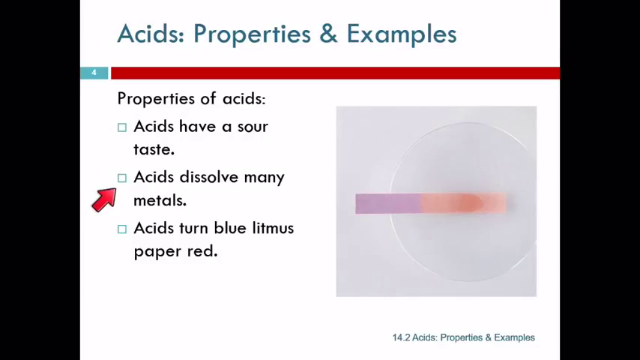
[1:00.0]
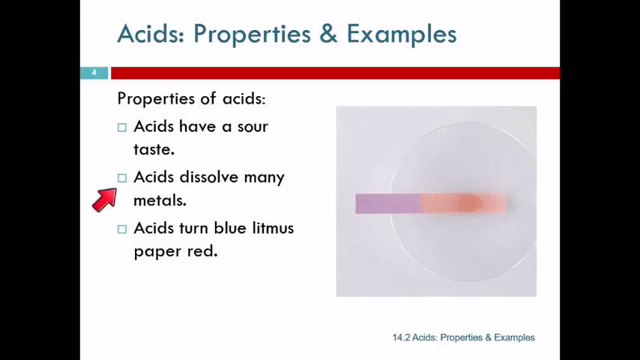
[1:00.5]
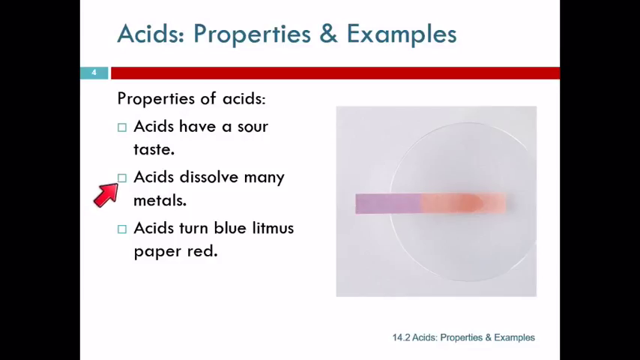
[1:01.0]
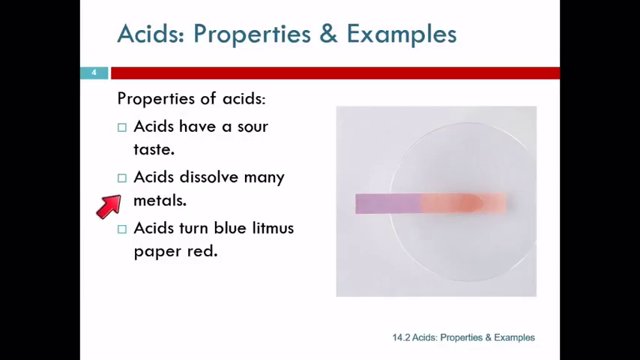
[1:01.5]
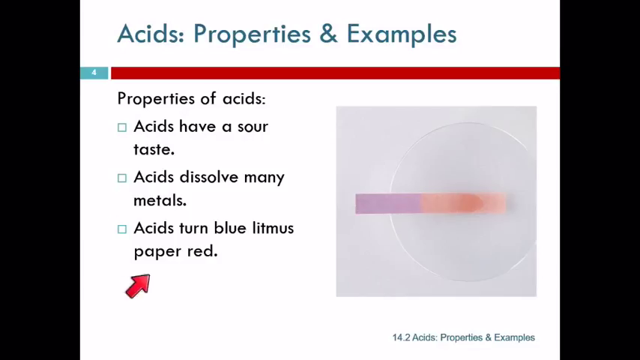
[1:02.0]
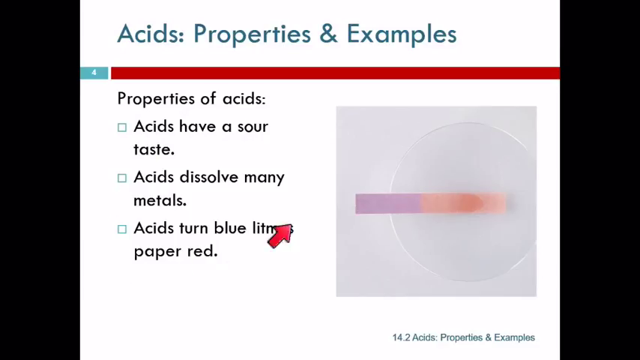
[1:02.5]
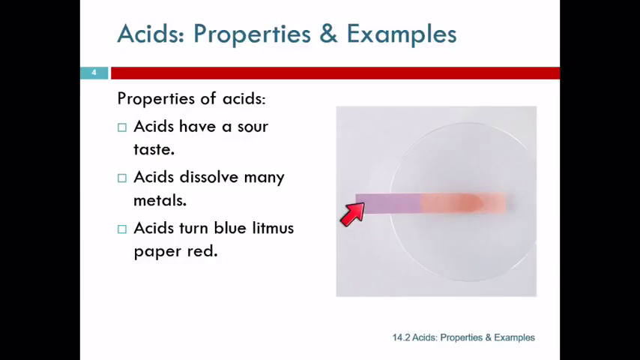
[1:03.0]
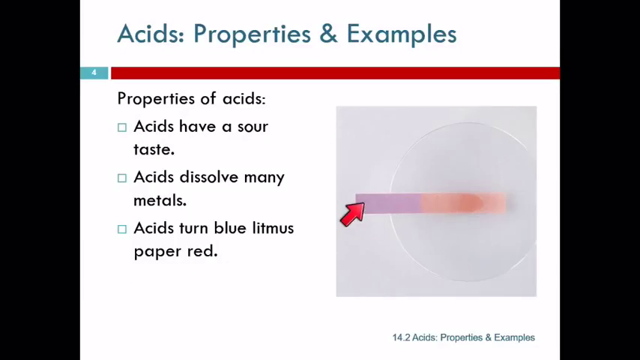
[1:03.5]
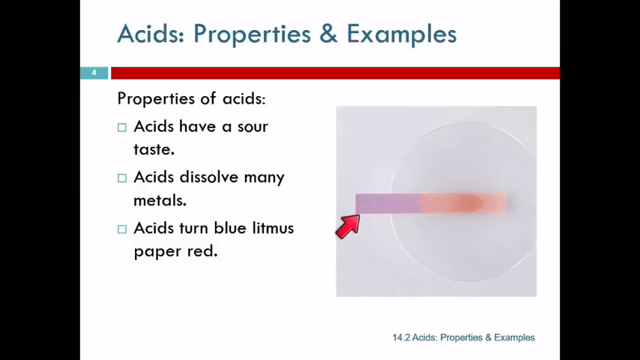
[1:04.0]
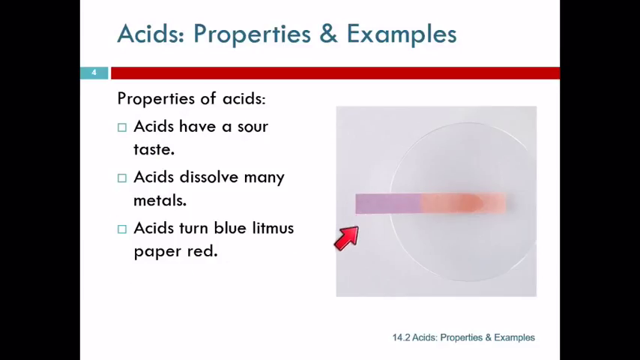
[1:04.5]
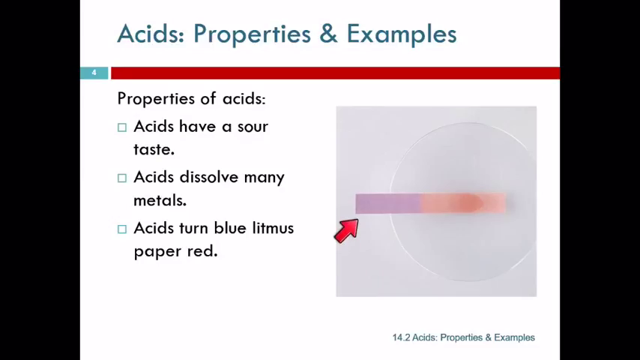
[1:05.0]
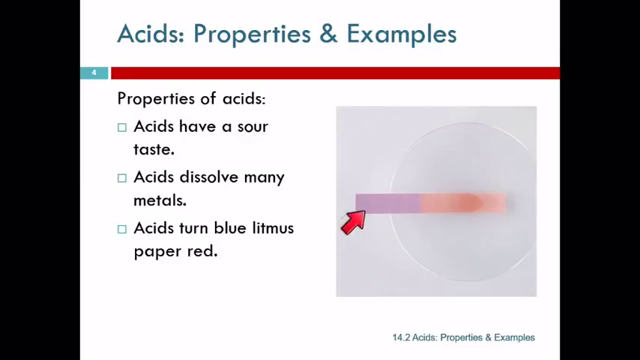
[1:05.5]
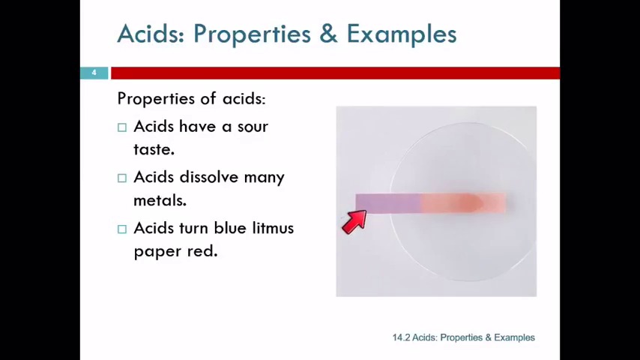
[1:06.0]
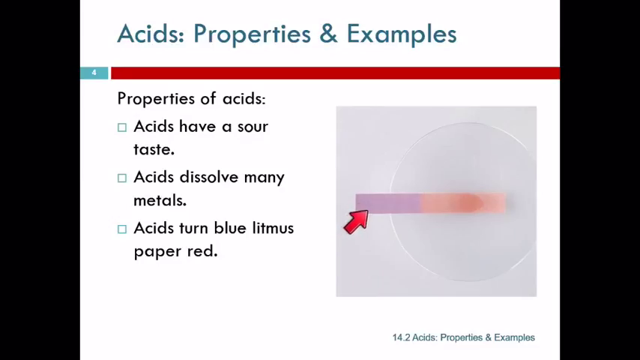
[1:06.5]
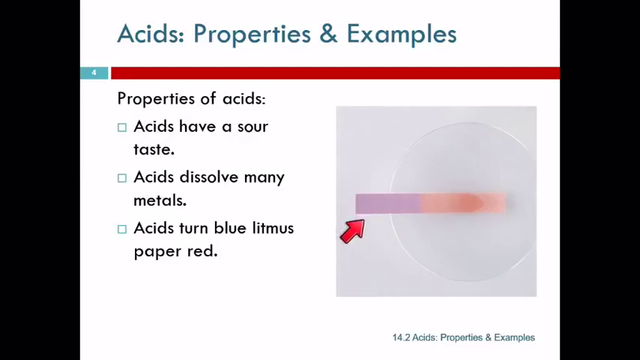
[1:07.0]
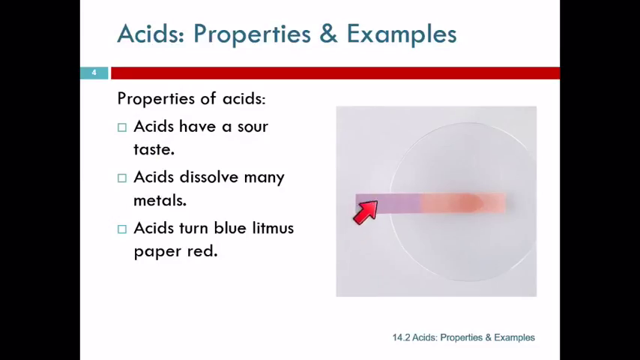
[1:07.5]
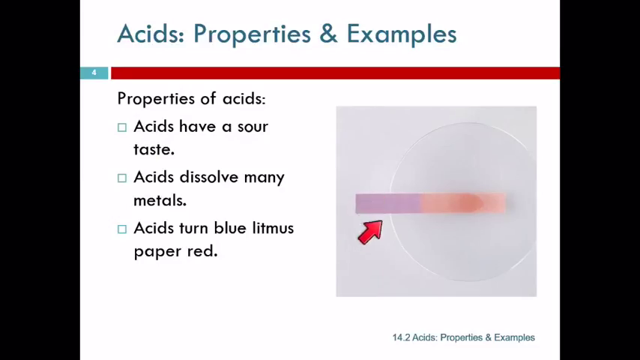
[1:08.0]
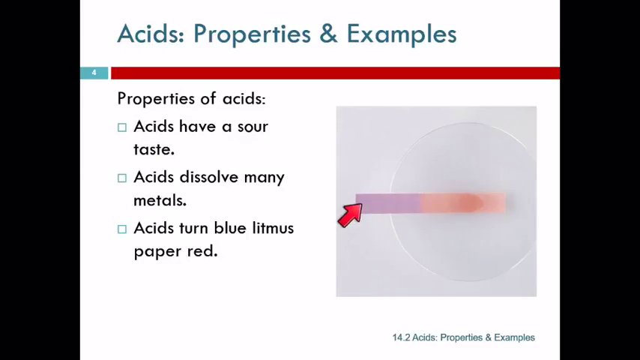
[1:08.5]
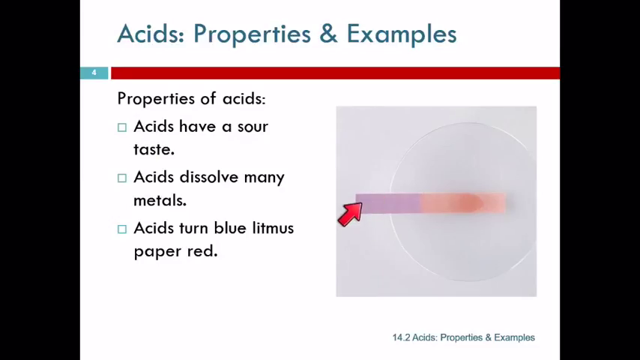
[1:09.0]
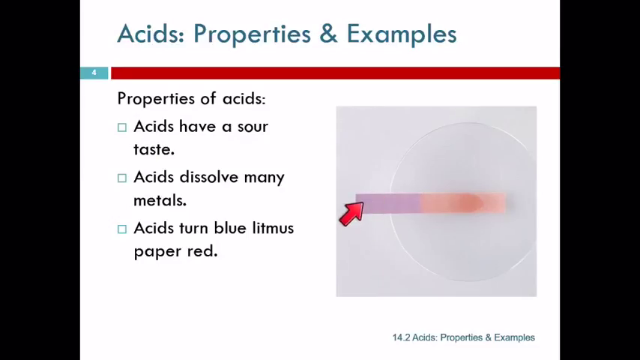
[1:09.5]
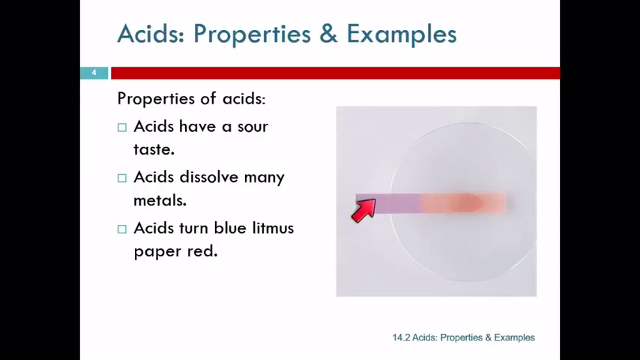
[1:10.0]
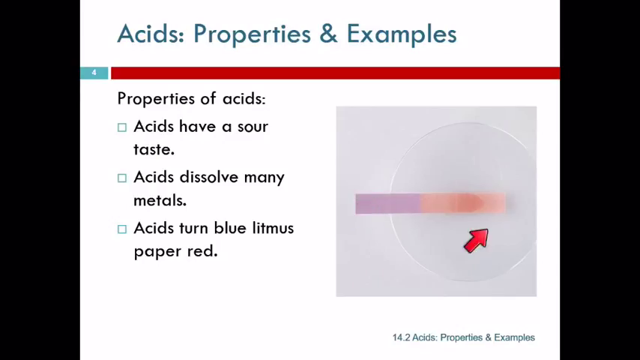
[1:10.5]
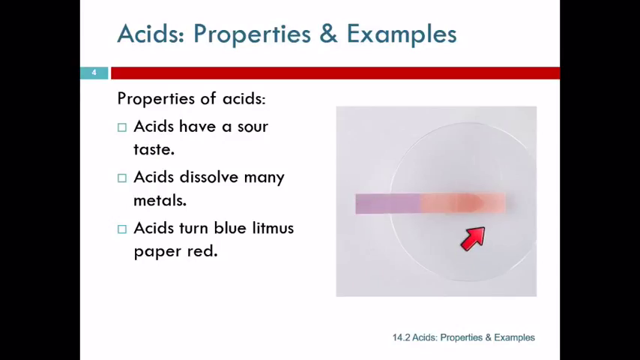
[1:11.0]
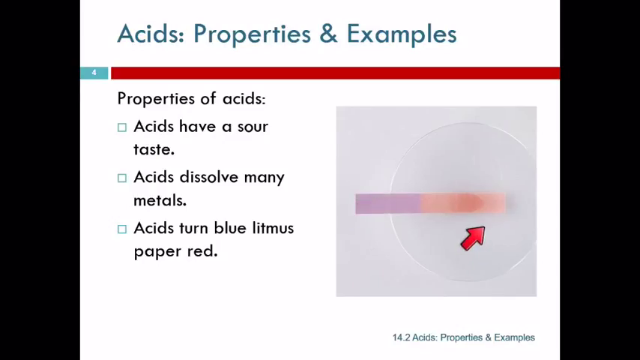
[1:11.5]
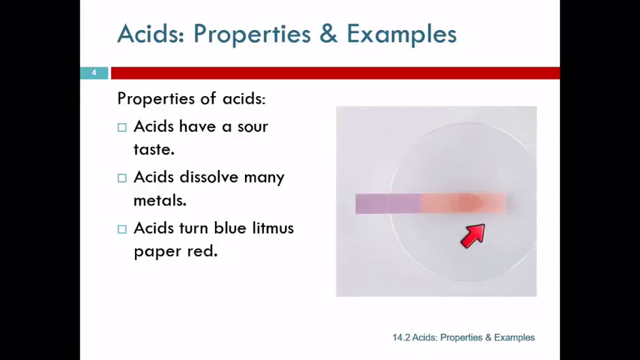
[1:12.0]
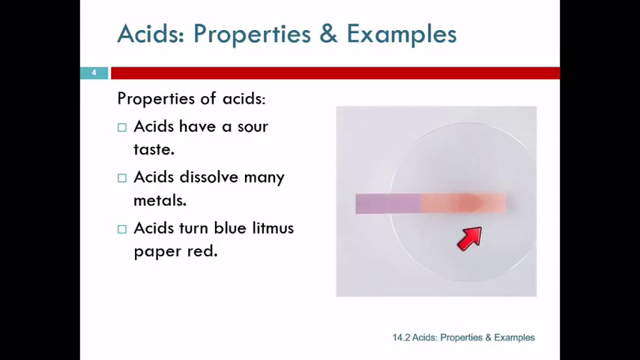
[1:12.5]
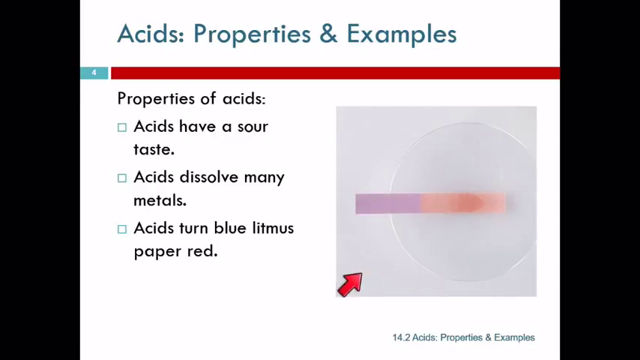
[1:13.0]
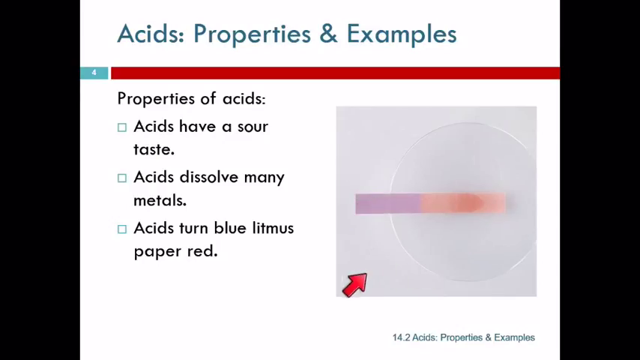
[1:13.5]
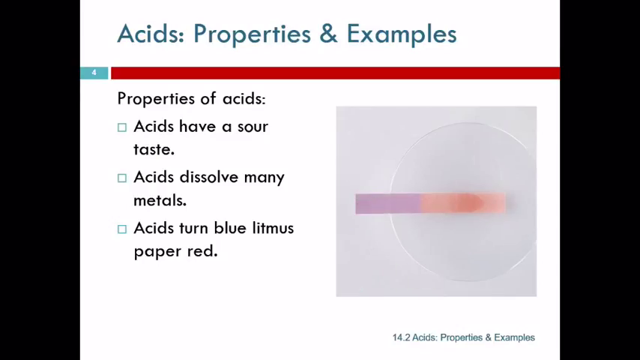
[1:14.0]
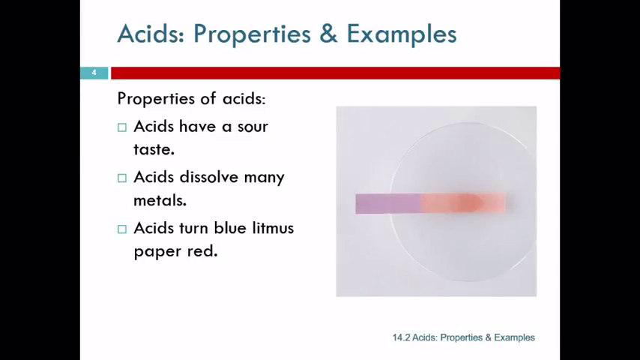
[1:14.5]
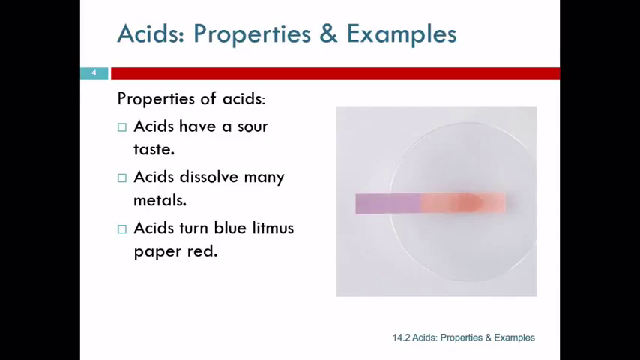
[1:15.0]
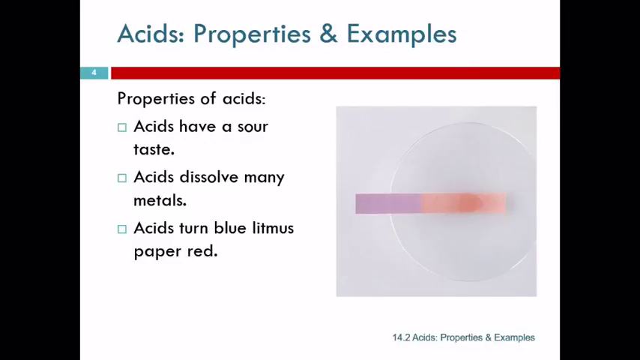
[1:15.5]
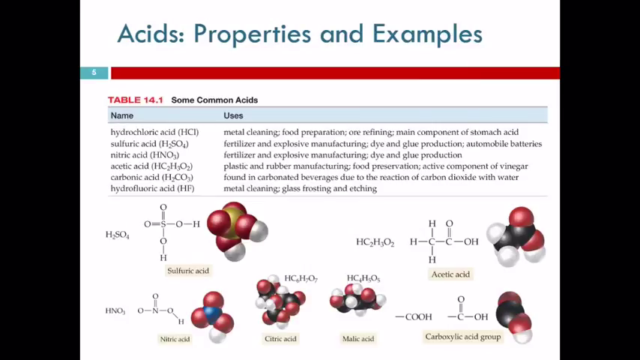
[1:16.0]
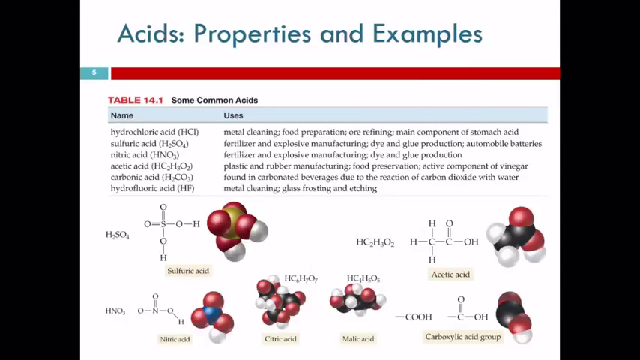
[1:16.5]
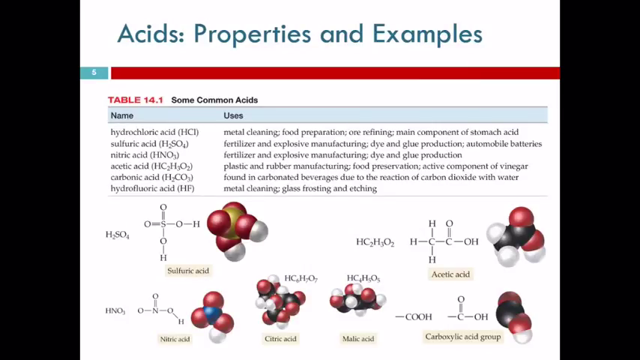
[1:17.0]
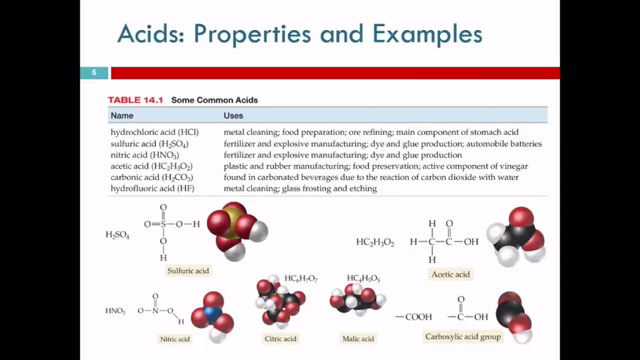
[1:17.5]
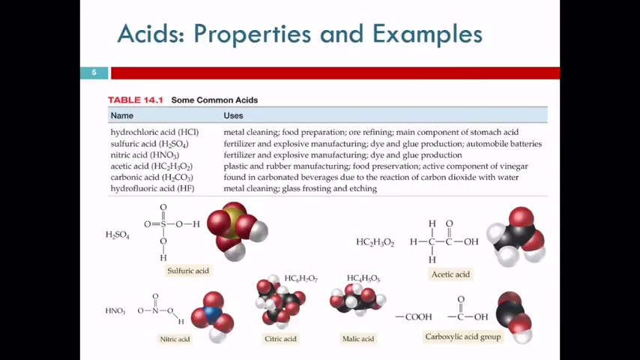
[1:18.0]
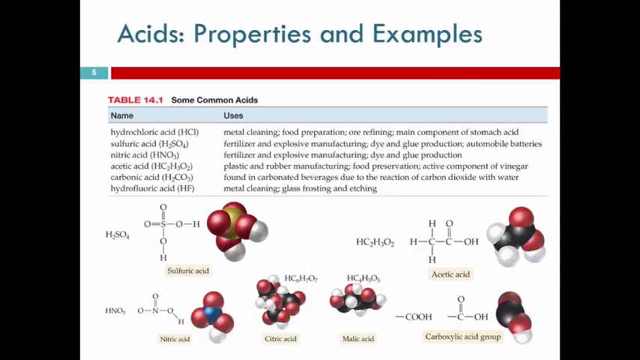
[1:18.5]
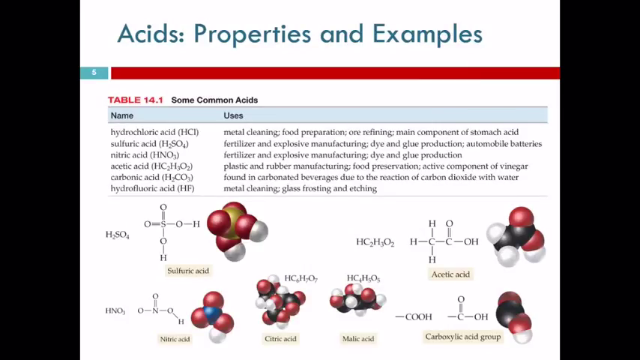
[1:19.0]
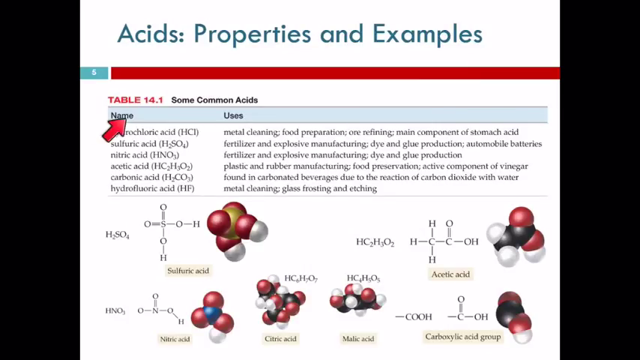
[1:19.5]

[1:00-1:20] A page in a book with a white background has "acids and properties and examples" written at the top. Right below it is a red line stretching from the left side to the right side, beginning with a number 4 written in white on a shade of blue. In the bottom right corner is an image of a circle with a strip stretching from the center of the circle toward the left, overlapping the circle; the strip is pink and purple. Words are written on the left side, and a red arrow moves around the page. The next page has a table that looks like a scientific table, headed "table 14.1" in red and "some common acids" in black. At the bottom are diagrams explaining different types of acids.